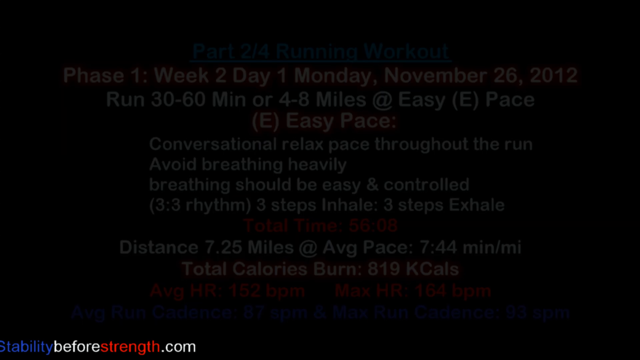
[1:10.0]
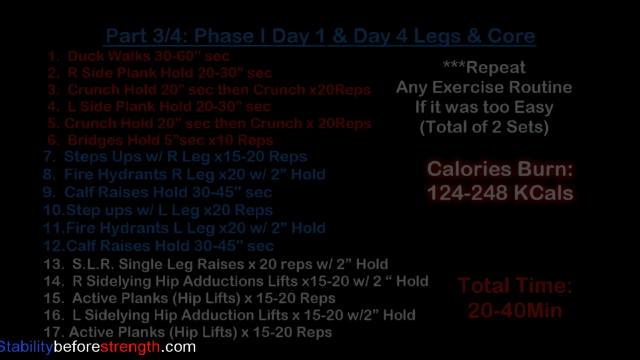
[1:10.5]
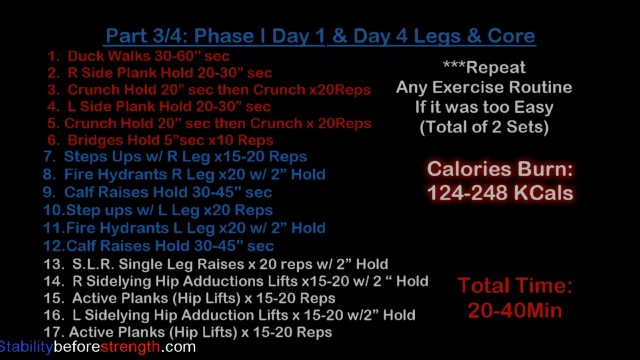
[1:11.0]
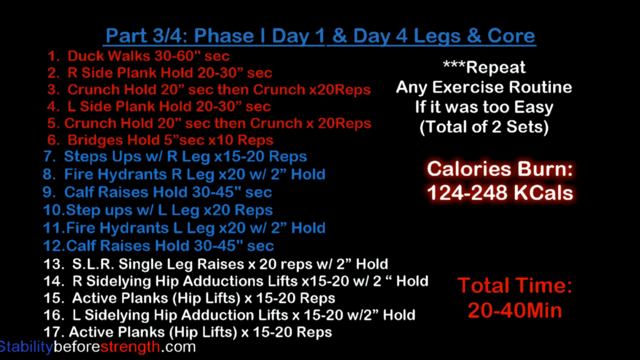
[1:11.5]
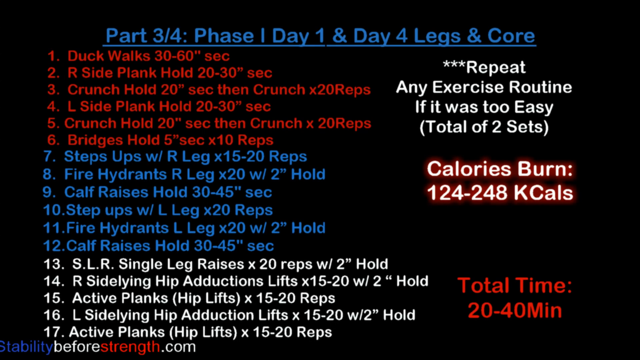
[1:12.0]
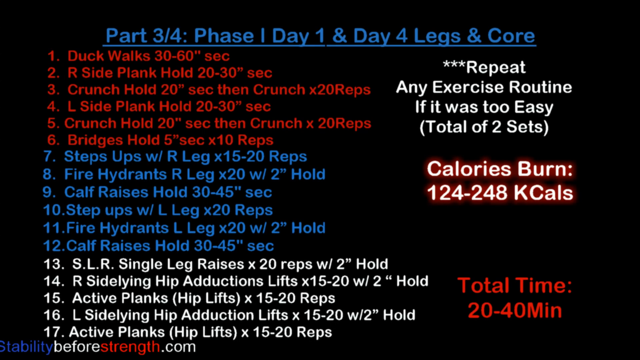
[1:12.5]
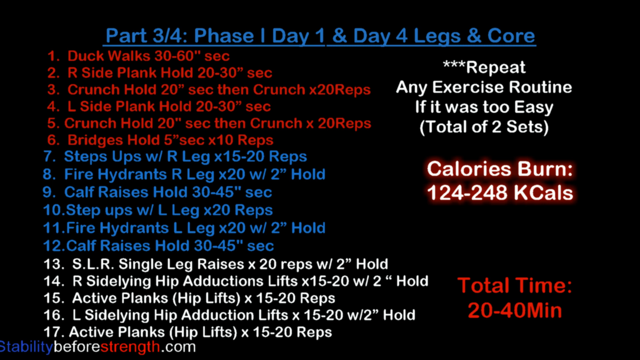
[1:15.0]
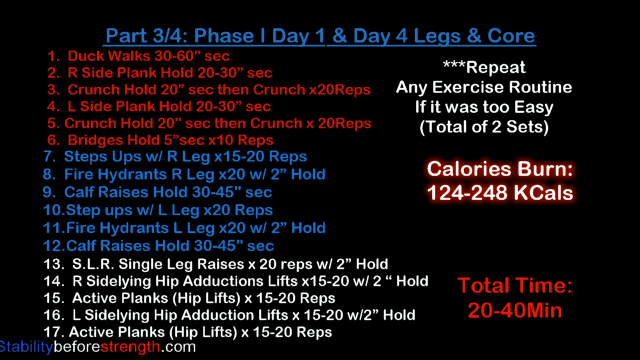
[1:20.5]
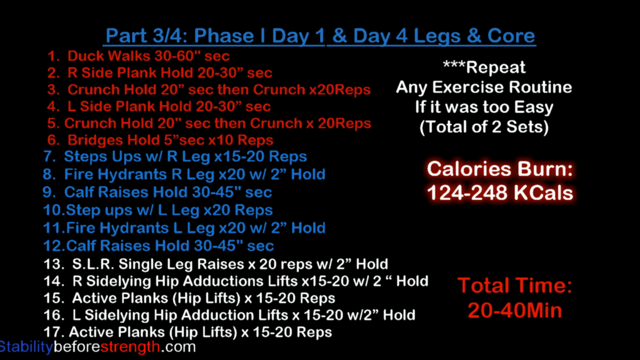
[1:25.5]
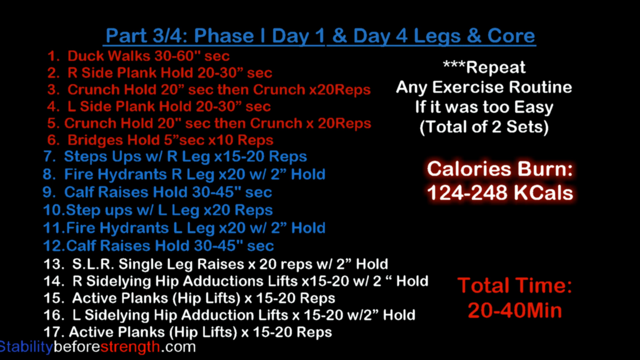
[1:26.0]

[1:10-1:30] White, red and blue text reads "Part three out of four, phase one, day one and day four, legs and core. 1 duck walk 30 to 60 sec. 2 R-side plank hold 20 to 30 sec. 3 crunch hold 20 sec, then crunch x 20 reps. 4 L-side plank hold 20 to 30 sec. 5 crunch hold 20 sec, then crunch x 20 reps. 6 bridges hold 5 sec, 10 reps." Further text in blue reads "7 step ups with R-leg x 15 to 20 reps. 8 fire hydrants R-leg x 20 with two hold. 9 calf raises hold 30 to 45 sec. 10 step ups with L-leg x 20 reps. 11 fire hydrants left leg x 20 with two hold. 12 calf raises hold 30 to 40 sec. 13 SLR single leg raises x 20 reps with two hold. 14 R-side lying hip abductions lifts x 15 to 20 with two hold. 15 active planks hip lifts x 15 to 20 reps. 16 L-side lying hip abduction lifts x 15 to 20 with two hold. 17 active planks hip lifts x 15 to 20 reps. Repeat any exercise routine if it was too easy, total of two sets. Calories burn 124 to 248 kcals, total time 20 to 40 minutes."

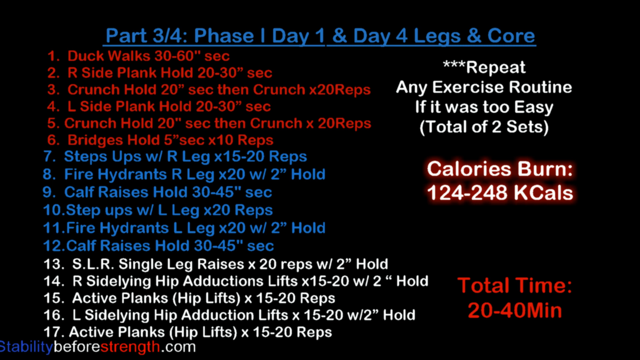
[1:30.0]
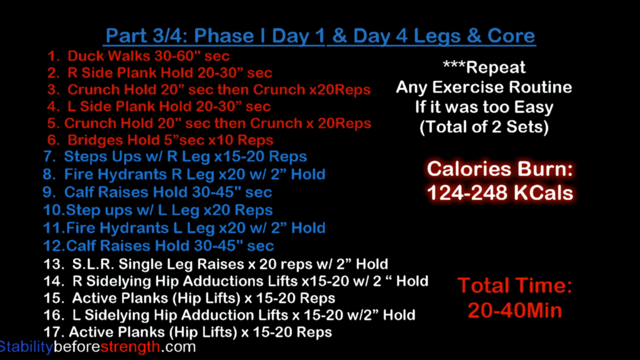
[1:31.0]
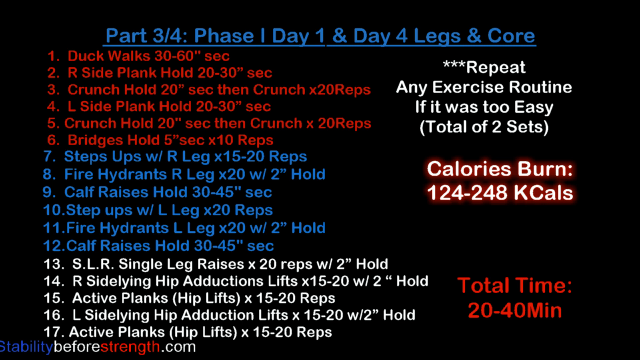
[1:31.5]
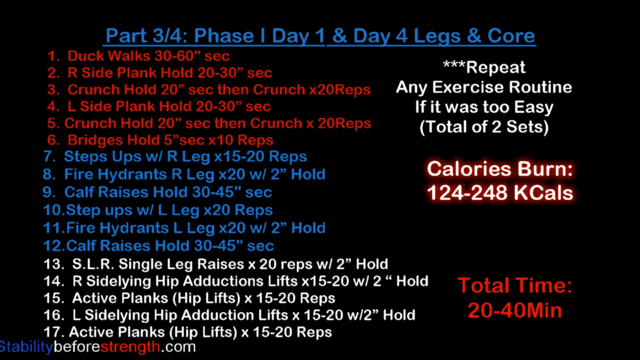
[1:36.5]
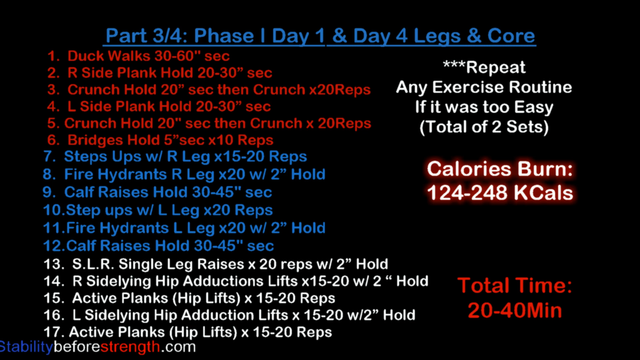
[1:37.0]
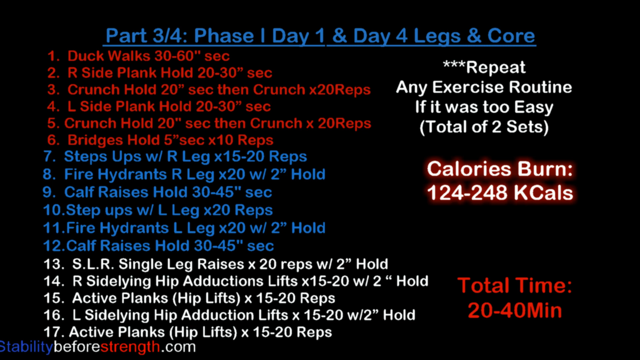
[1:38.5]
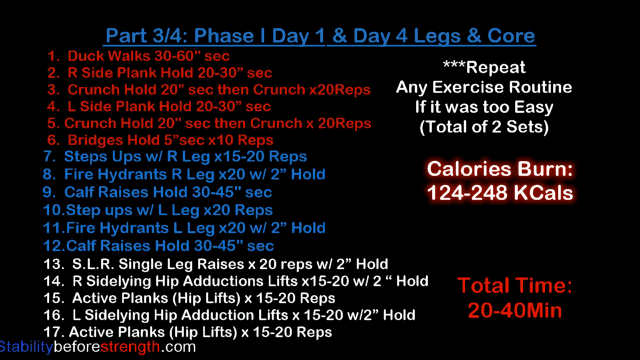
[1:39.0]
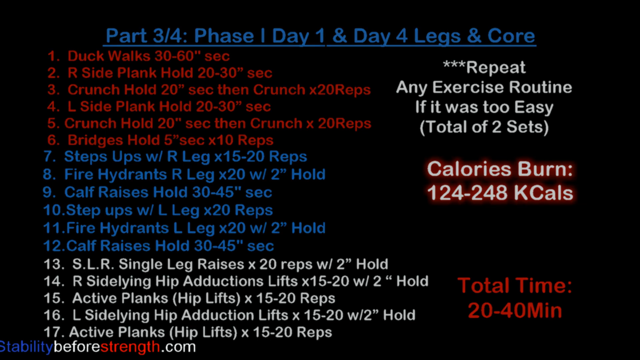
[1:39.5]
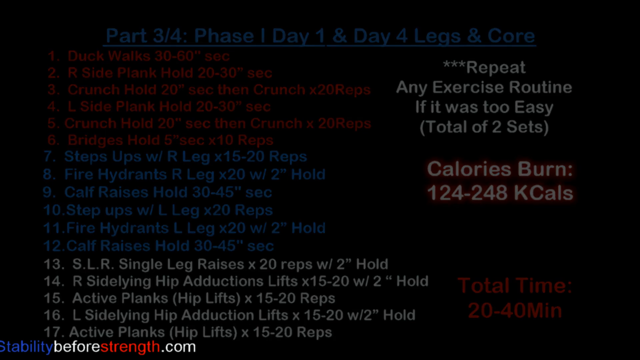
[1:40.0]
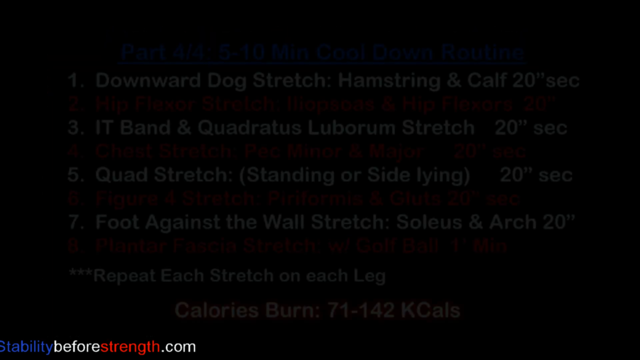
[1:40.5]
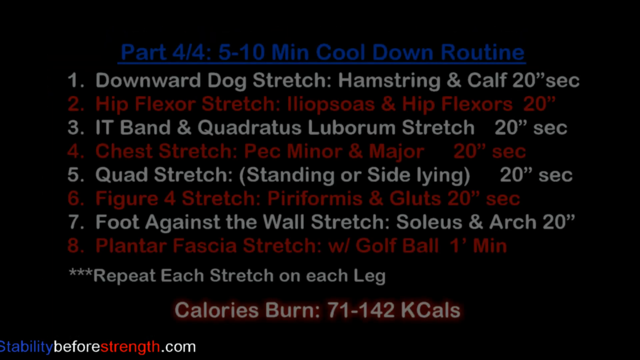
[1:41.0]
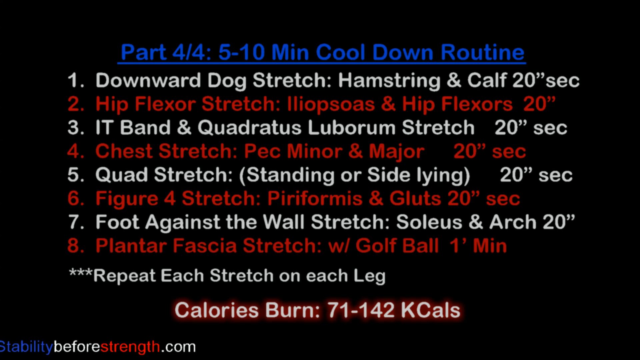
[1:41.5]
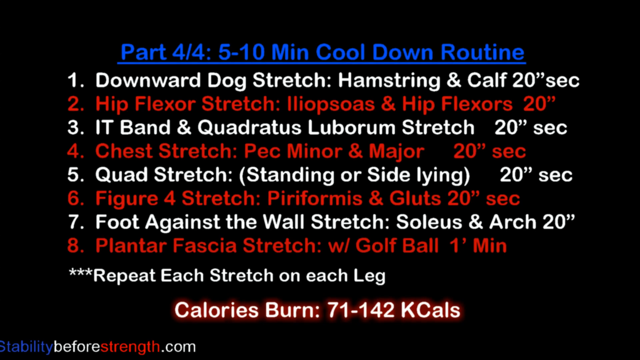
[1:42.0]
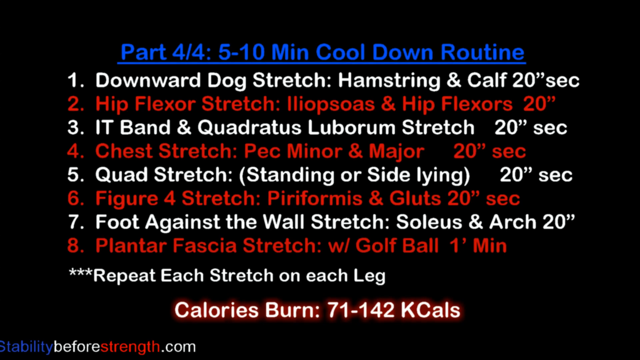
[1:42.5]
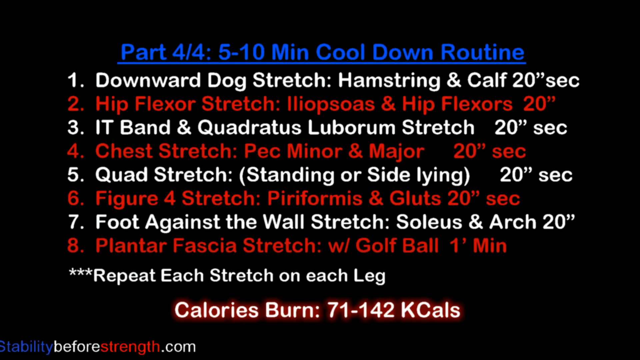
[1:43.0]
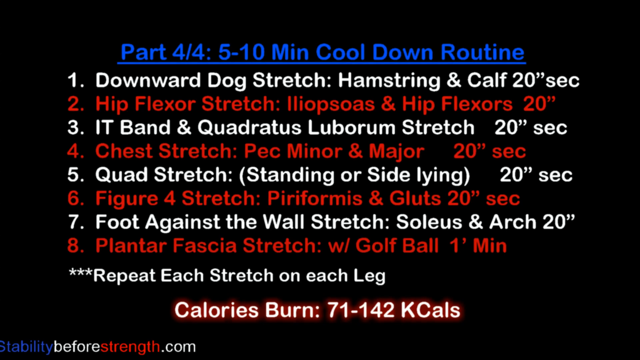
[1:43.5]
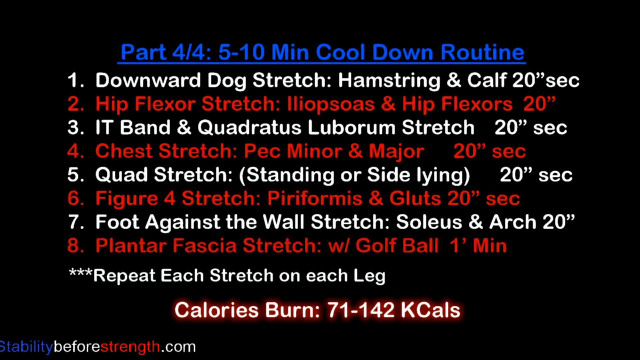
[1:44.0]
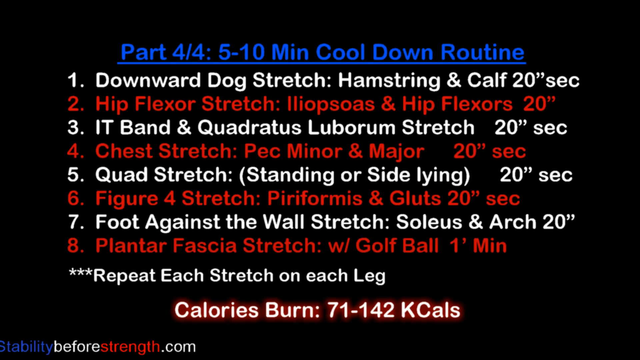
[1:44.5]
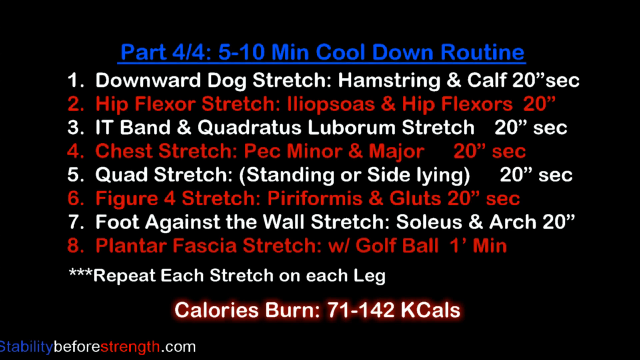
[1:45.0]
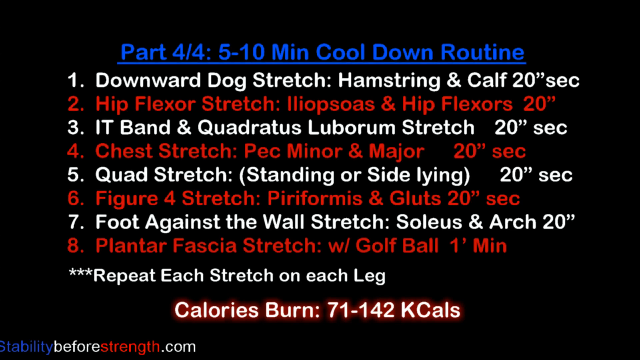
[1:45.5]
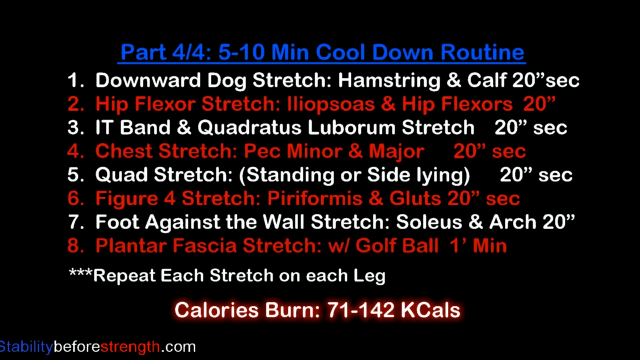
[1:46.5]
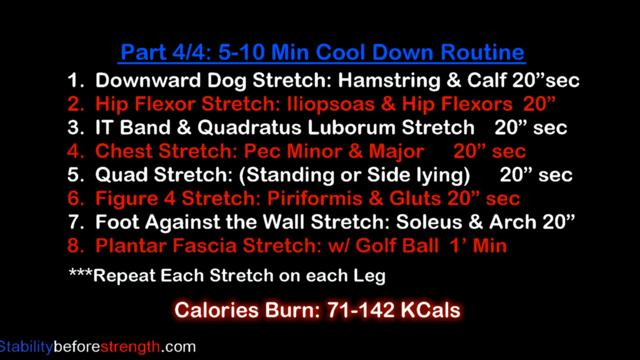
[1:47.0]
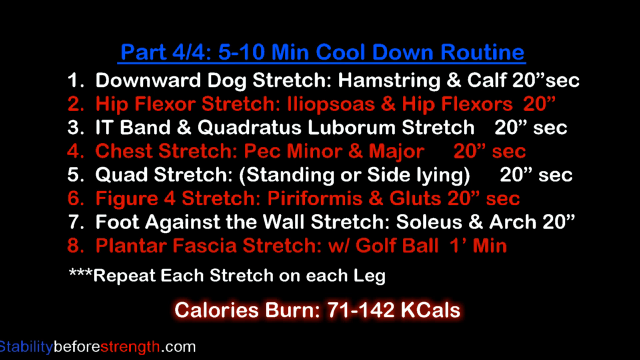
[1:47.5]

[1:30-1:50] A black background shows white, red and blue text reading "Part three out of four, phase one, day one and day four, legs and core. 1 duck walks 30 to 60 sec. 2 R-side plank hold 20 to 30 sec. 3 crunch hold 20 sec then crunch x 20 reps. 4 L side plank hold 20 to 30 sec. 5 crunch hold 20 sec then crunch x 20 reps. 6 bridges hold 5 sec x 10 reps. 7 step ups with right leg x 15 to 20 reps. 8 fire hydrants right leg x 20 with two hold. 9 calf raises hold 30 to 45 sec. 10 step ups with left leg x 20 reps. 11 fire hydrants left leg x 20 with two hold. 12 calf raises hold 30 to 45 sec. 13 SLR single leg raises x 20 reps with two hold. 14 right side lying hip abductions lifts x 15 to 20 with two hold. 15 active planks hip lifts x 15 to 20 reps. 16 left side lying hip abduction lifts x 15 to 20 with two hold. 17 active planks hip lifts x 15 to 20 reps. Repeat any exercise routine if it was too easy, total of two sets. Calories burn 124 to 248 kcals, total time 20 to 40 minutes." Another screen then pops up with a black background and blue, red and white text reading "Part four out of four, five to ten minute cool down routine. 1 downward dog stretch hamstring and calf 20 sec. 2 hip flexor stretch" and continuing "3 IT band and quadratus lumbarum stretch 20 sec. 4 chest stretch pec minor and major 20 sec. 5 quad stretch standing or side lying 20 sec. 6 figure 4 stretch piriformis and glutes 20 sec. 7 foot against the wall stretch soleus and arch 20. 8 plantar fascia stretch with golf ball one minute. Repeat each stretch on each leg. Calories burn 71 to 142 kcals."